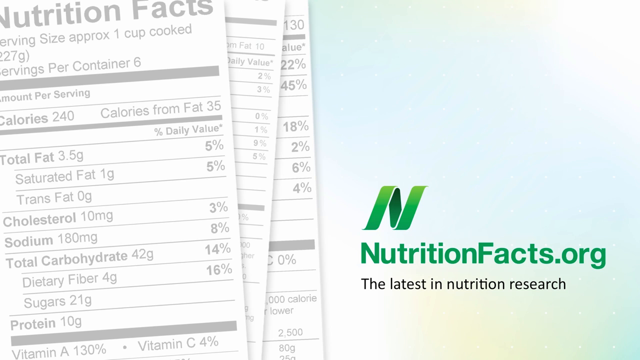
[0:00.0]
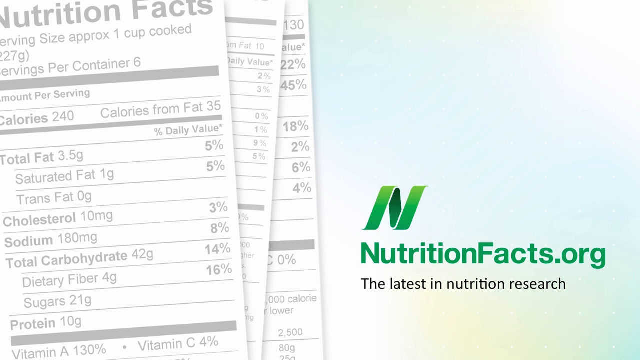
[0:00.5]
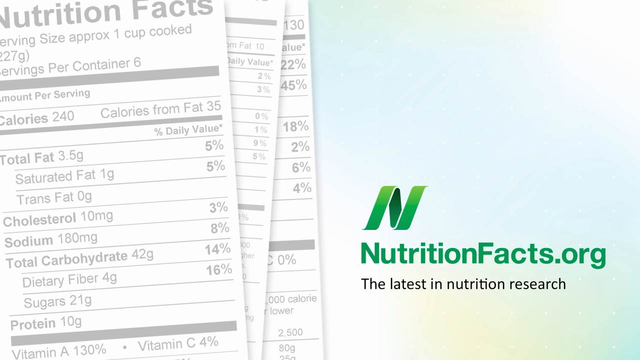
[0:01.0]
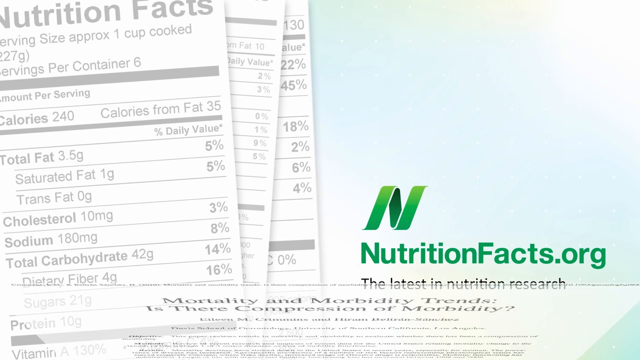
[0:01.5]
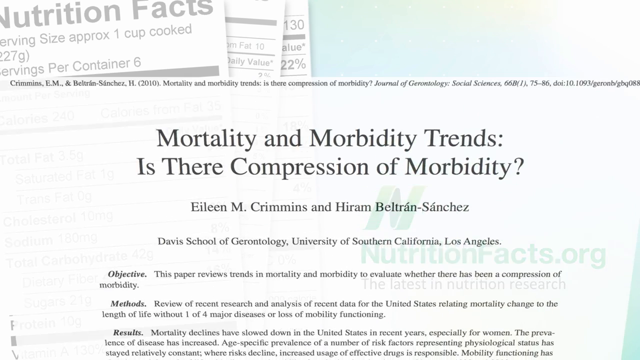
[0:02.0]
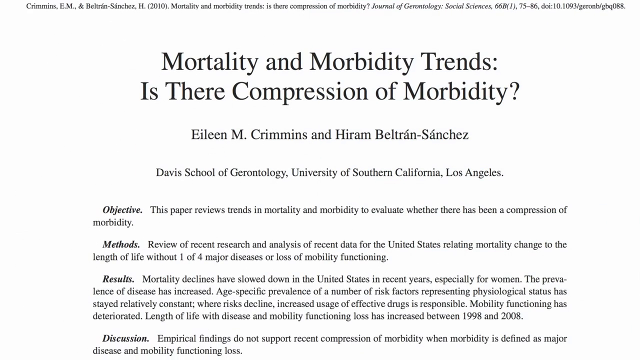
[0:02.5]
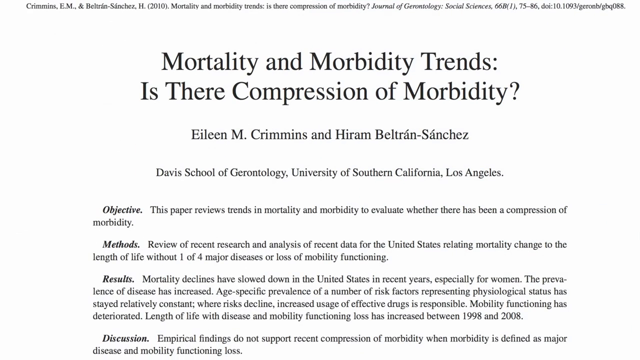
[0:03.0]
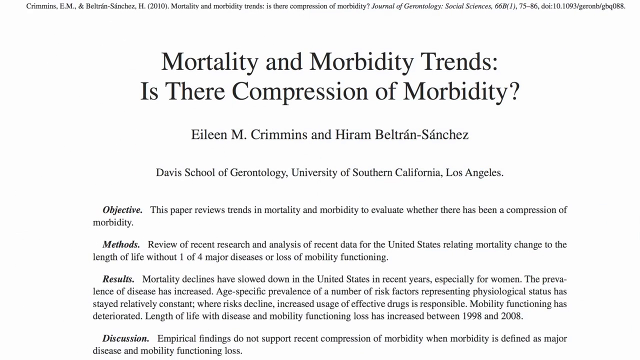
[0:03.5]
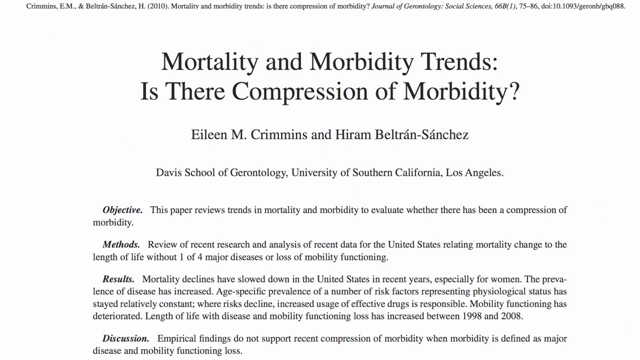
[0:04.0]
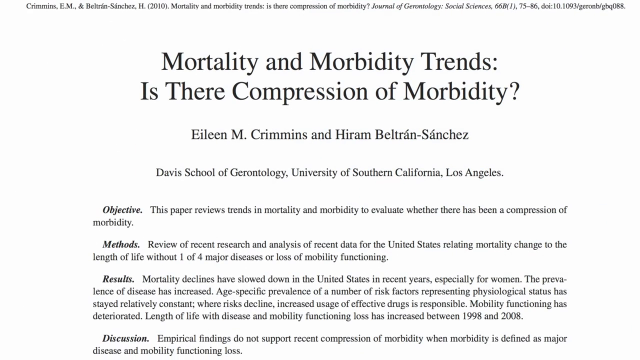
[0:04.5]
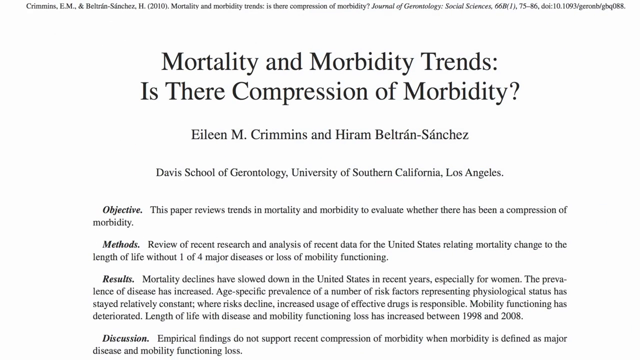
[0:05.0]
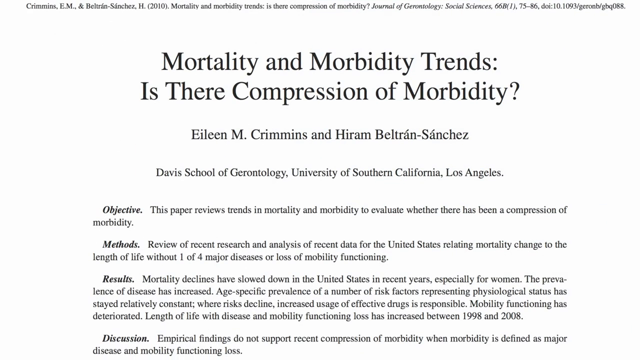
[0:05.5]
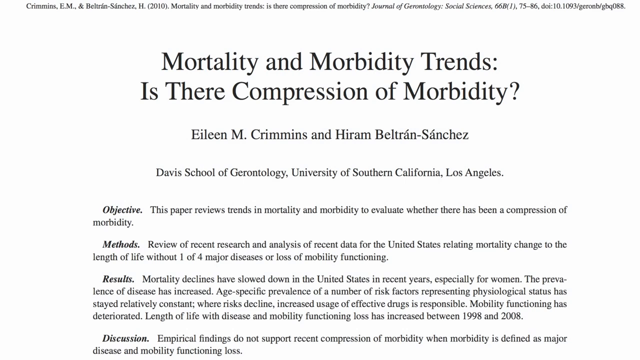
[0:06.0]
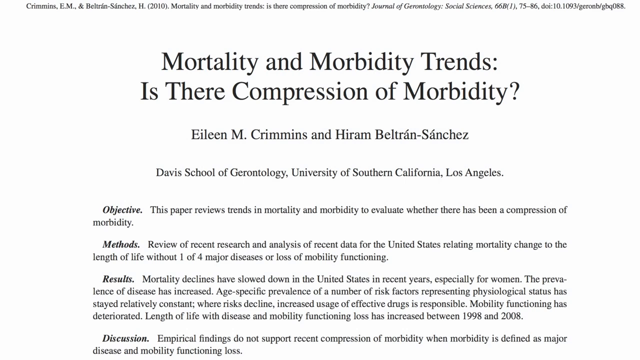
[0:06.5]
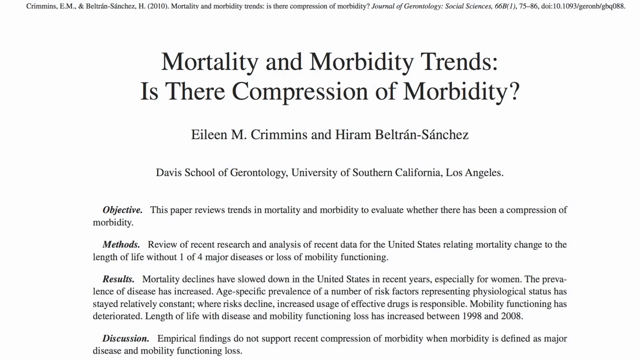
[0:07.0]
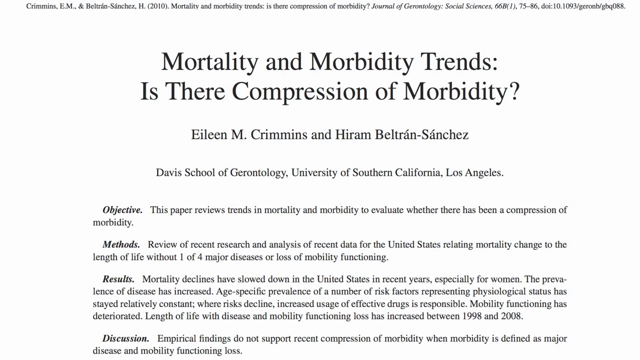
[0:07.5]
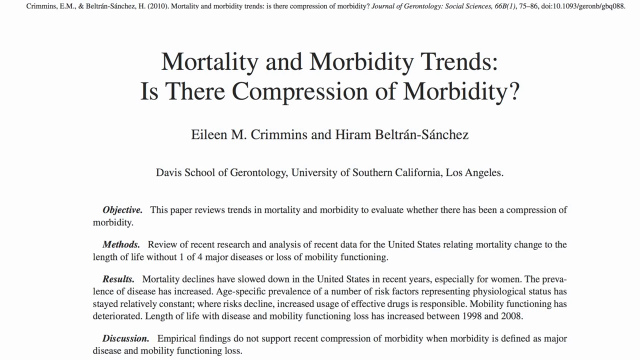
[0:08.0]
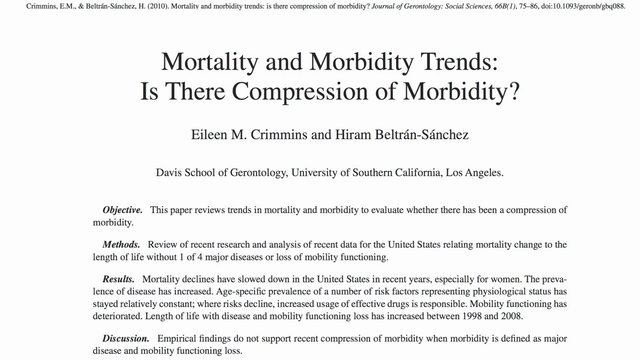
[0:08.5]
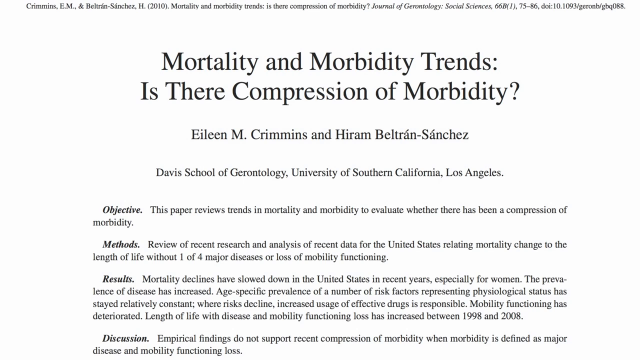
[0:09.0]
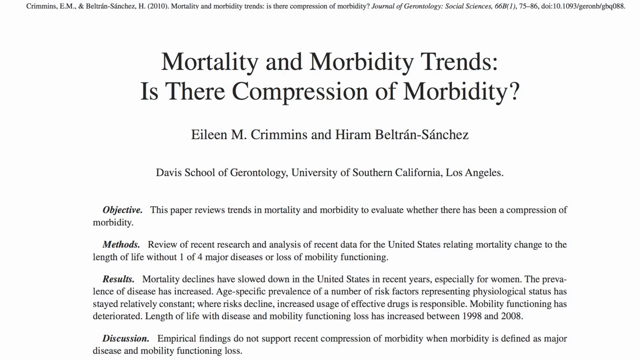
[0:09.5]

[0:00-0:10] A logo for nutritionfacts.org appears at the bottom right: a curvy, ribbon-like N that is green with a white gradient at the top. Right below it, text reads "the latest in nutrition research." On the left is a stock image of a nutrition label. Next, an article slides up from the bottom of the screen, titled "mortality and morbidity trends. Is there compression of morbidity?" It is credited to Eileen M. Crimms and Hiram Beltram-Sanchez.